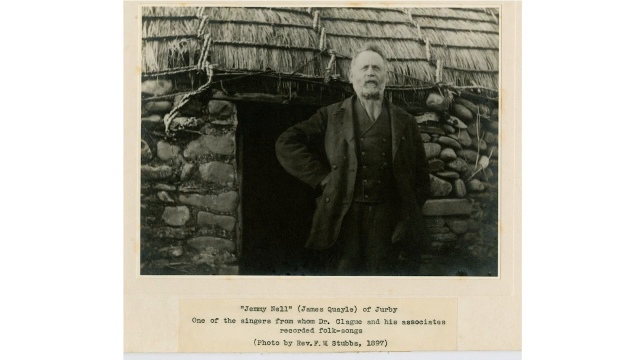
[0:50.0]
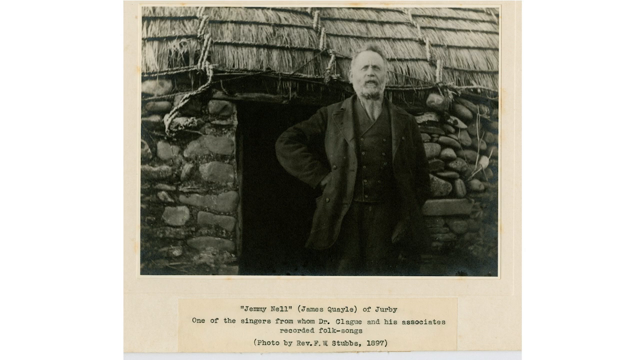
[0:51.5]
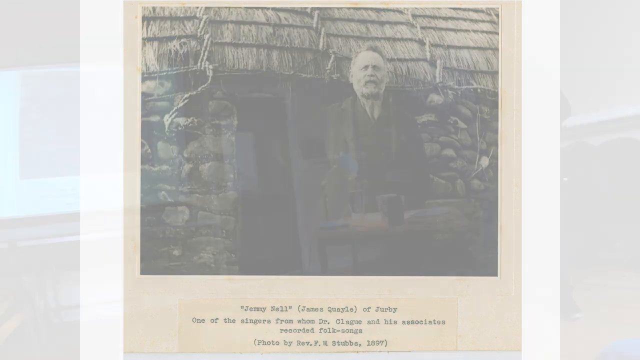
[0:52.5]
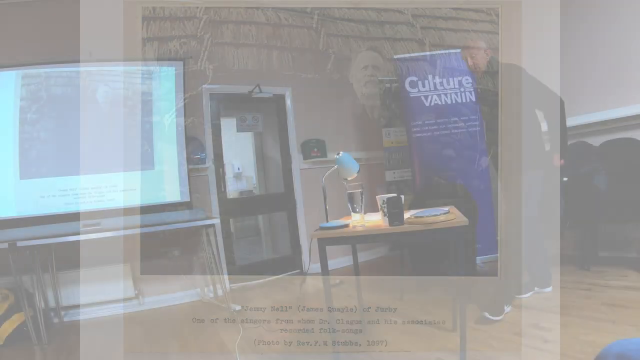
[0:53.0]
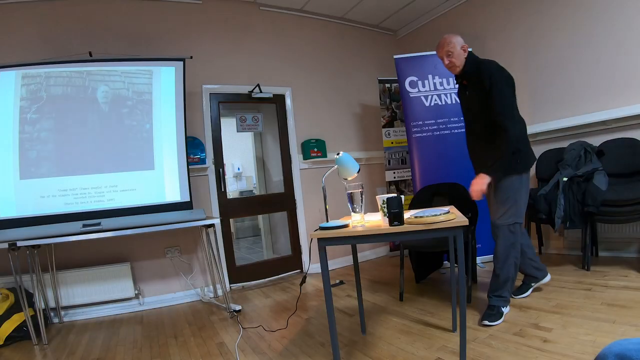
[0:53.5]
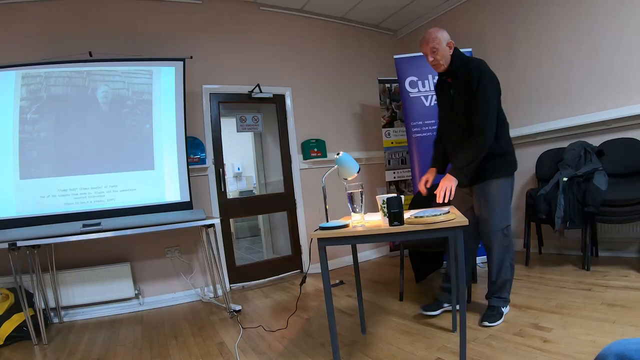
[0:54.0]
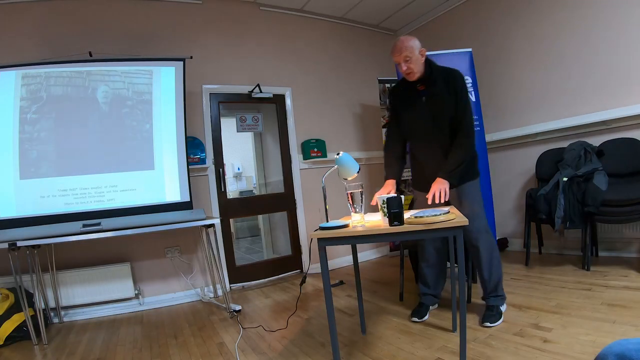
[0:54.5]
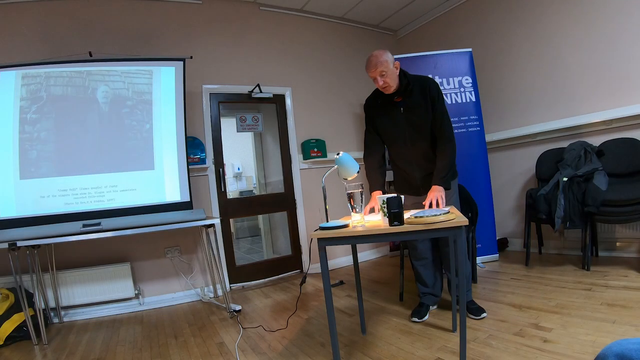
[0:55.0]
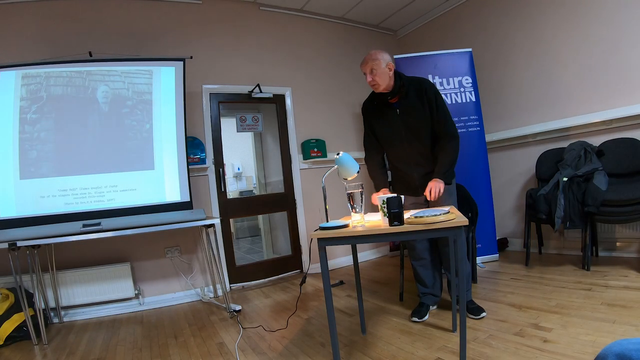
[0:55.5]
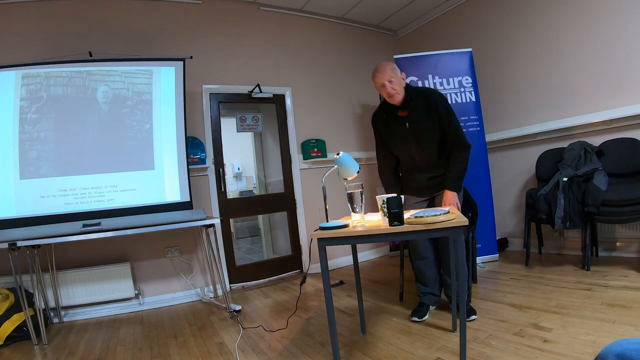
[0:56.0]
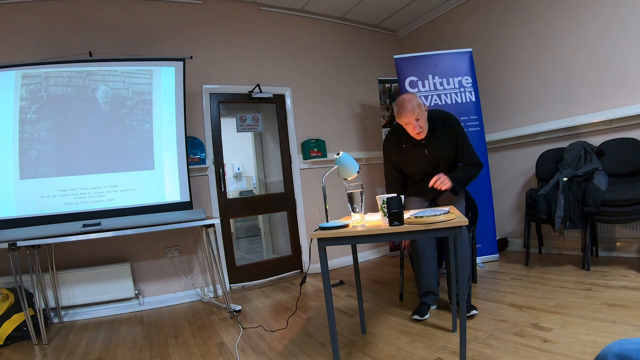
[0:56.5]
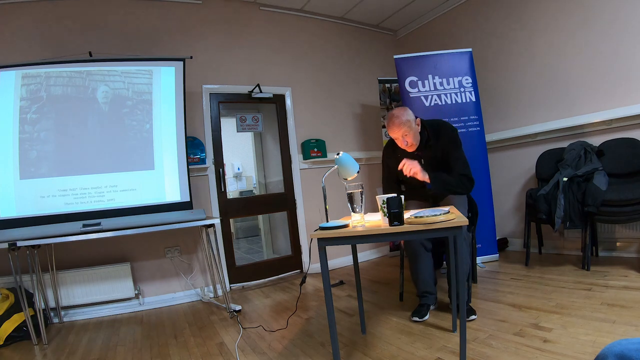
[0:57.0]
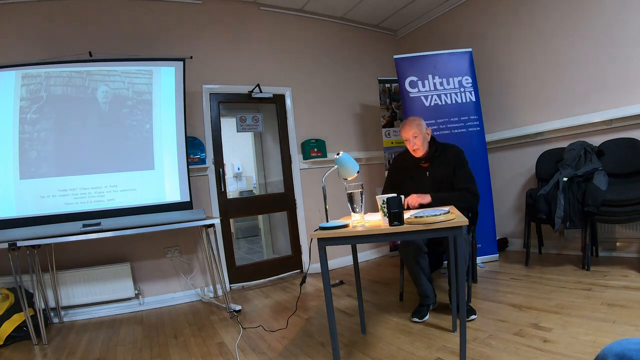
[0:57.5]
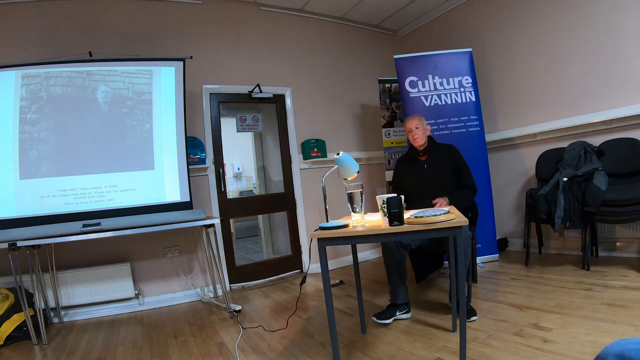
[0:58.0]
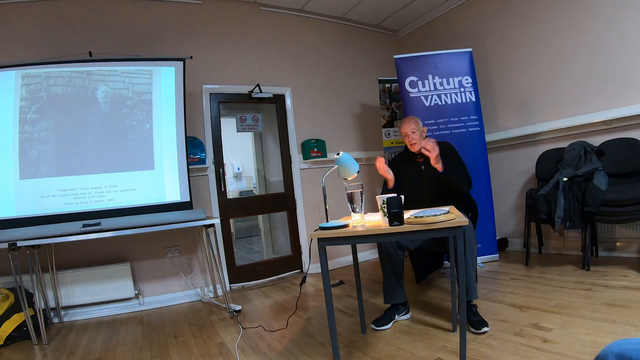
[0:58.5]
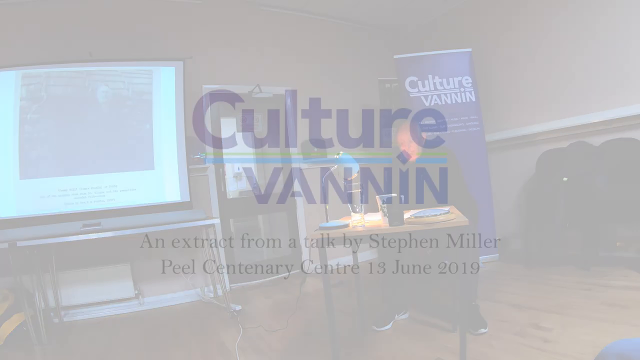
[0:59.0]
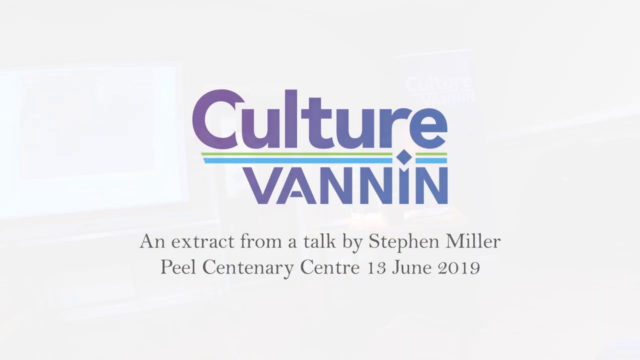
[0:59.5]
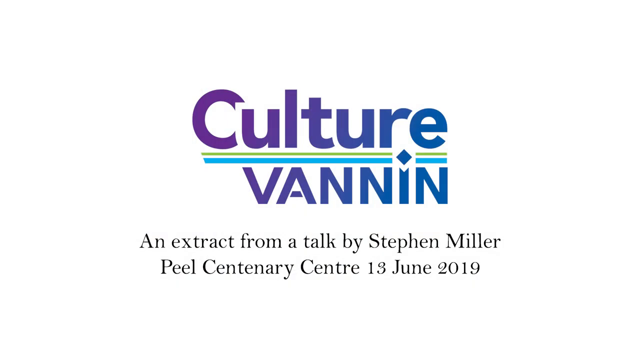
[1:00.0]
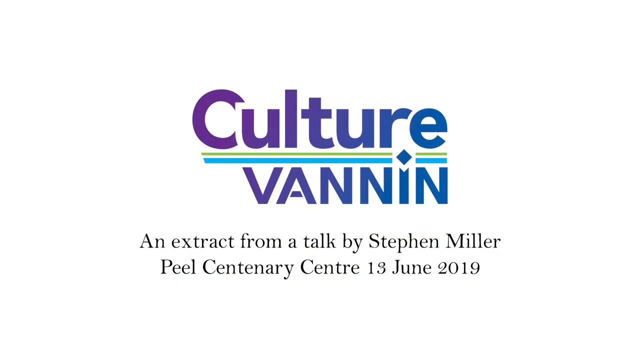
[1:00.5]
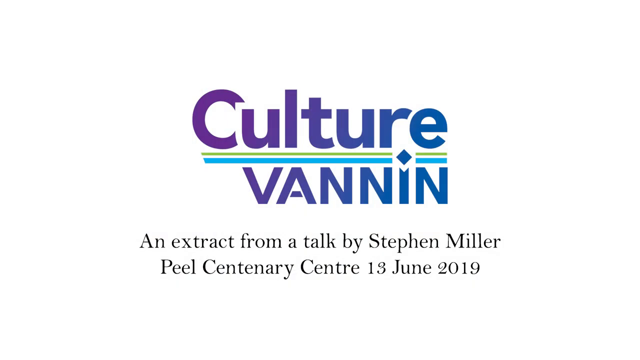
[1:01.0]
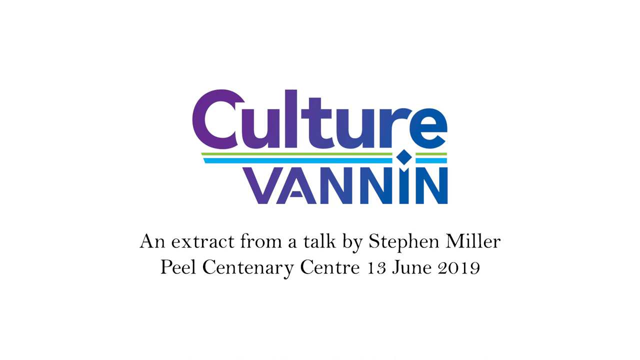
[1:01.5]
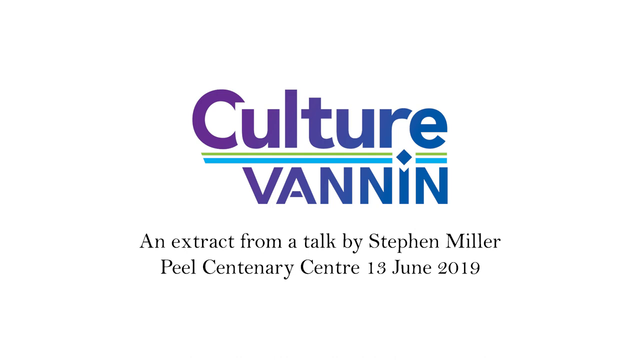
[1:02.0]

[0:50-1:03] A black and white photograph shows what looks like a man standing in front of a stone hut. The hut is in the background, with an open doorway that the man stands in front of. The stone walls of the hut are visible on the left and right, and at the top is what looks like a straw roof. The man looks like he is in his 70s and is a white man. He faces directly toward the camera with his right hand on his right hip and his left hand at his side, and appears to be wearing a thick coat and a thick vest while looking directly at the camera. Below the photograph is a lot of black text that appears to say "Jimmy Nell, James Quayle of Derby, one of the singers for whom Dr. Clegg and his associates recorded folk songs. Photo by Reverend F.M. Stubbs, 1897." The photograph stays on screen, then fades out to what looks like the lecturer: an old man, probably in his 60s or 70s, bald, wearing a black sweater and gray pants. A small table is in front of him in the foreground, and on the left side there is a projector. He puts both hands on the table, facing the camera, then sits down on the chair behind the table, raises his hand upward and talks. An outro screen then fades to white, with blue text in the middle reading "Colter Bannon" and black text at the bottom reading "an extract from a talk by Stephen Miller, Peale Centenary Center, 13 June 2019."